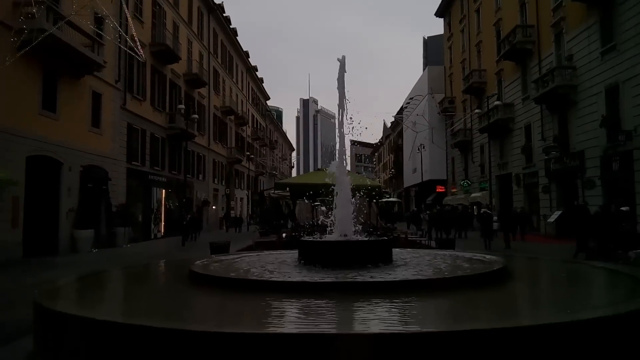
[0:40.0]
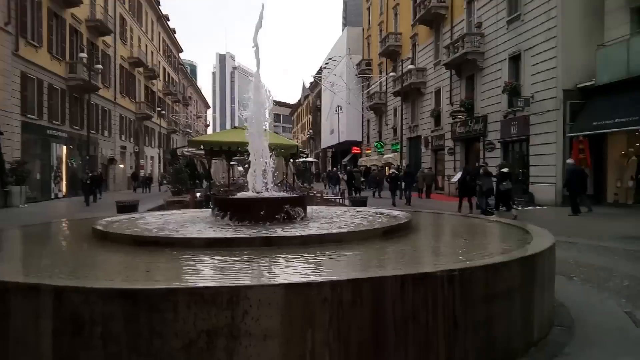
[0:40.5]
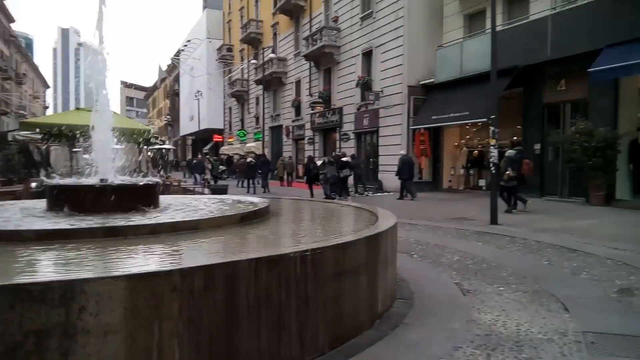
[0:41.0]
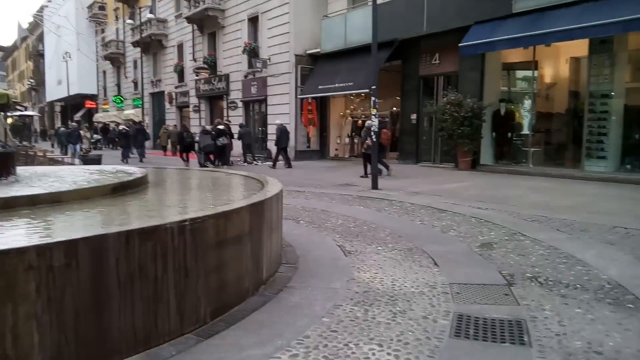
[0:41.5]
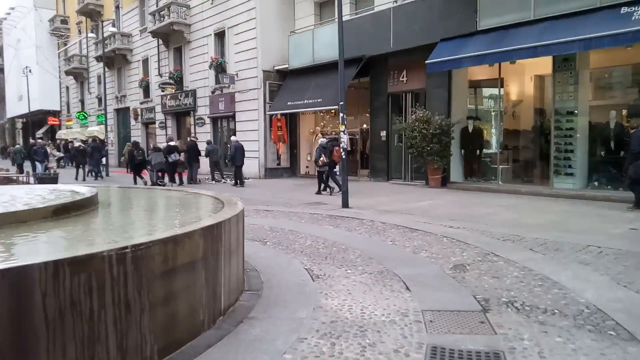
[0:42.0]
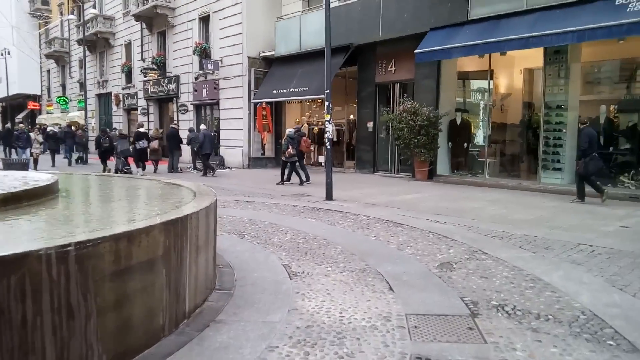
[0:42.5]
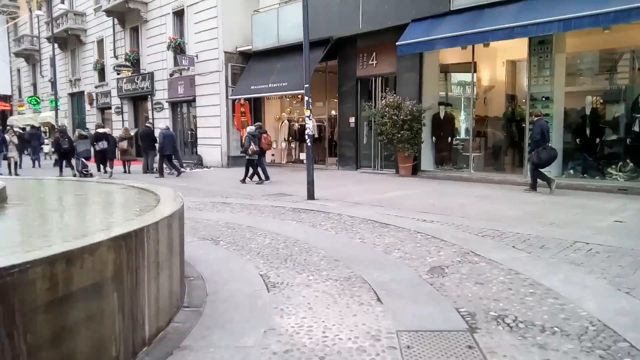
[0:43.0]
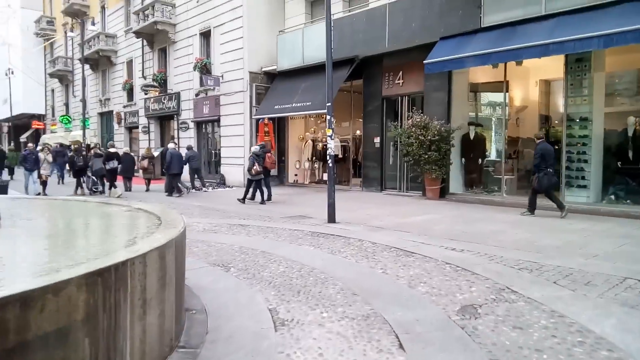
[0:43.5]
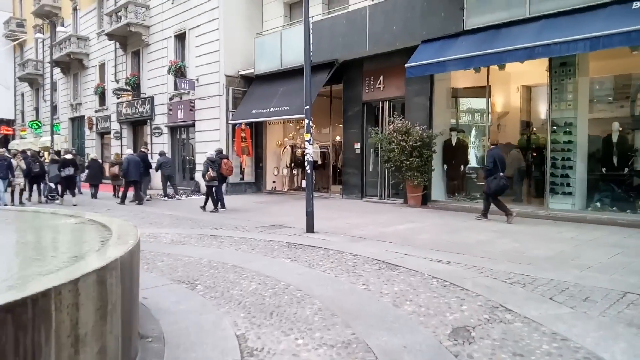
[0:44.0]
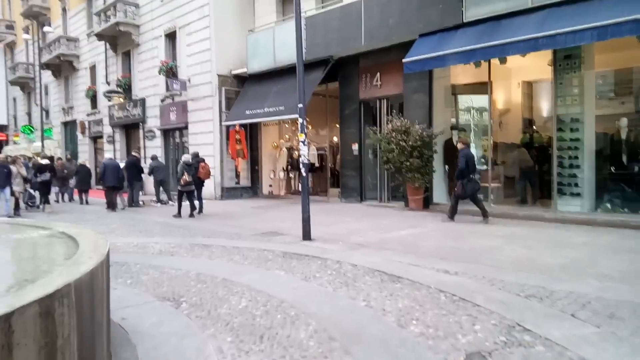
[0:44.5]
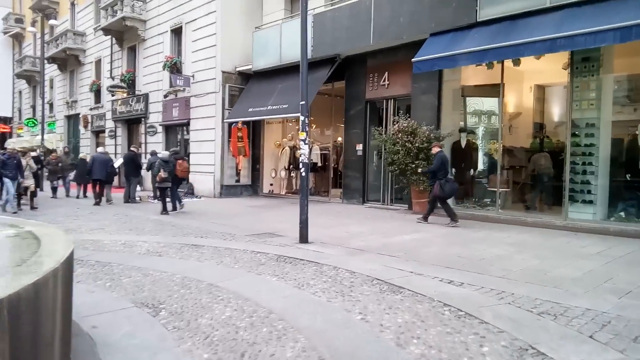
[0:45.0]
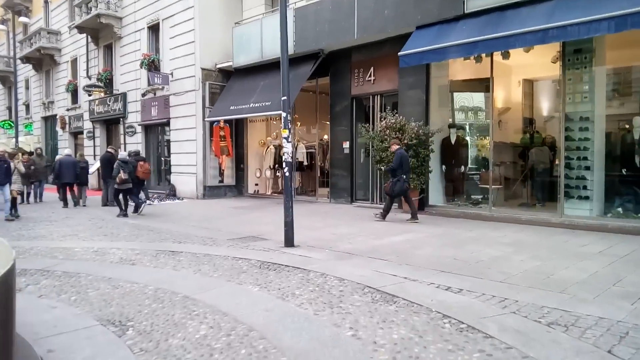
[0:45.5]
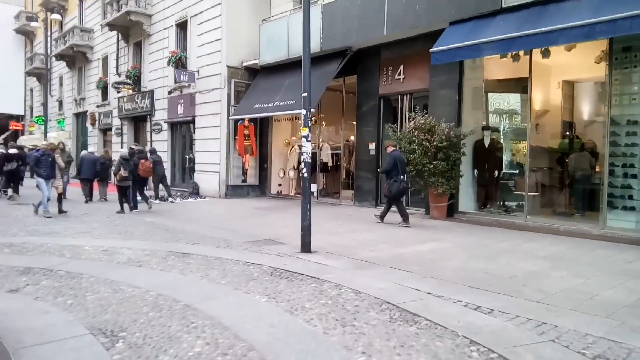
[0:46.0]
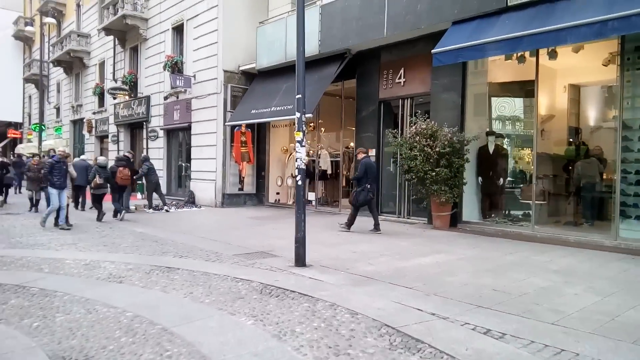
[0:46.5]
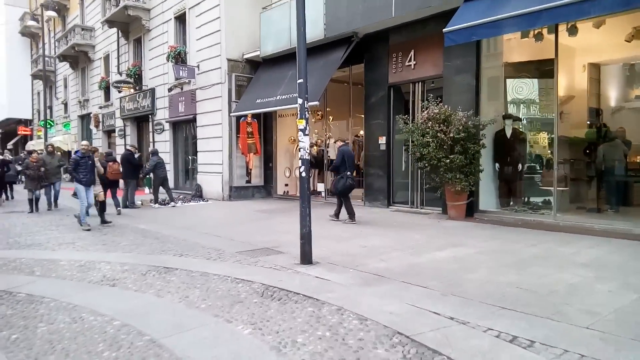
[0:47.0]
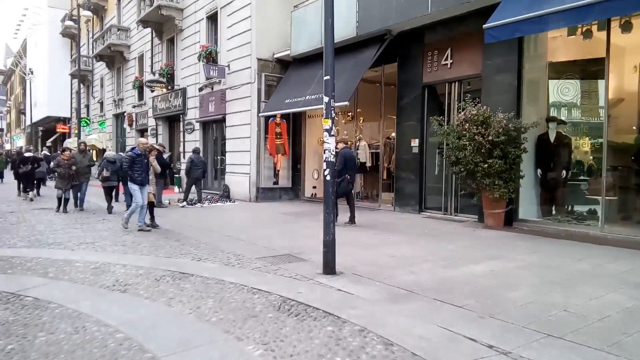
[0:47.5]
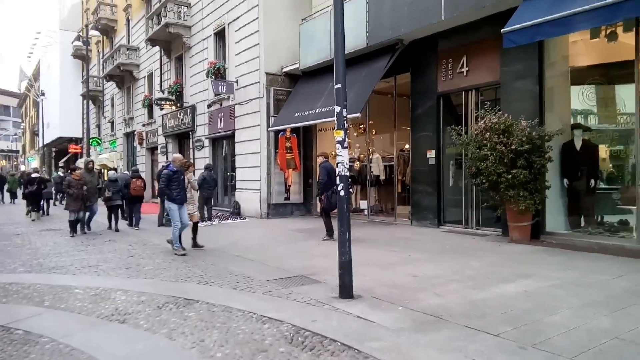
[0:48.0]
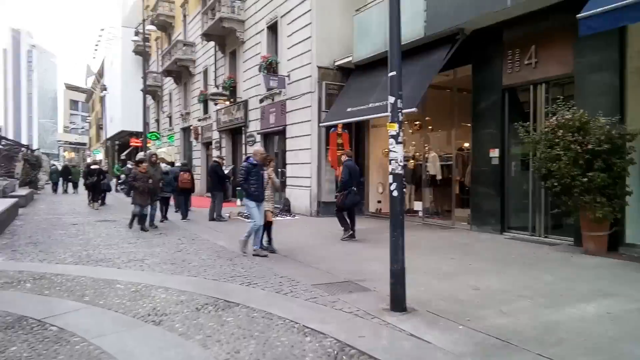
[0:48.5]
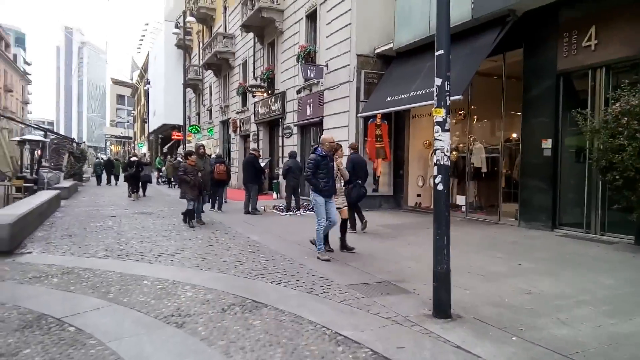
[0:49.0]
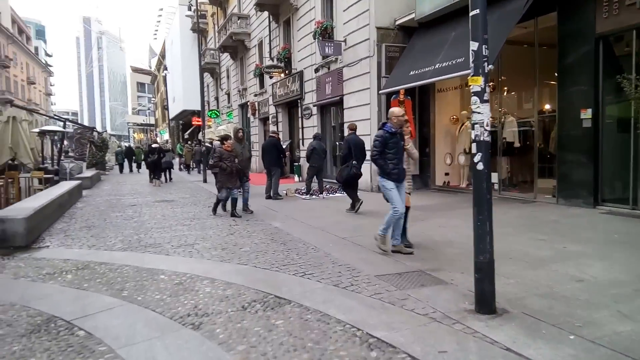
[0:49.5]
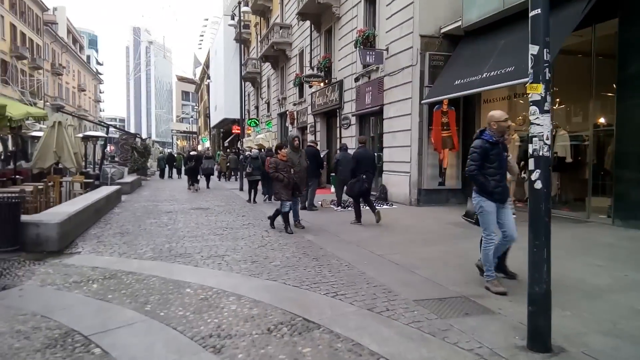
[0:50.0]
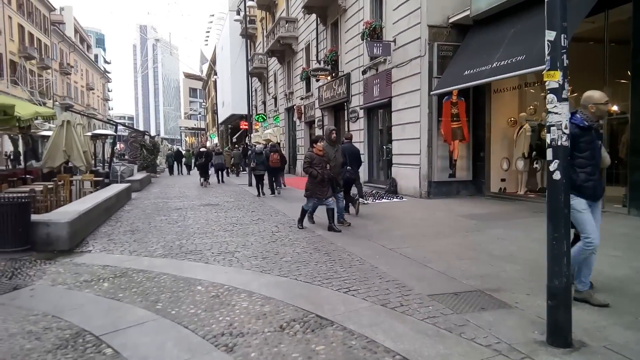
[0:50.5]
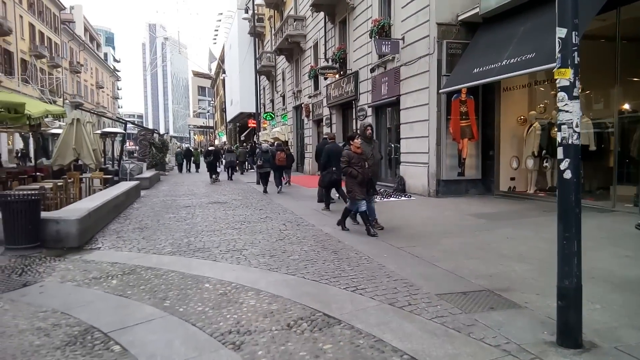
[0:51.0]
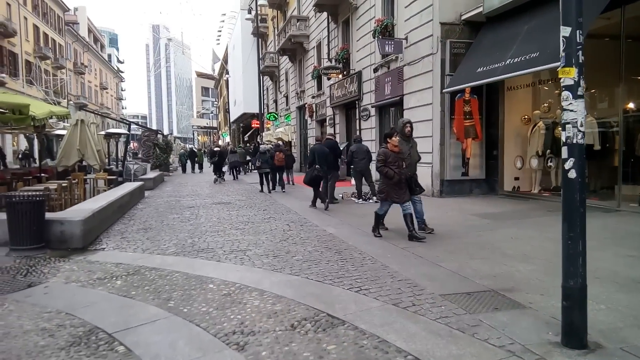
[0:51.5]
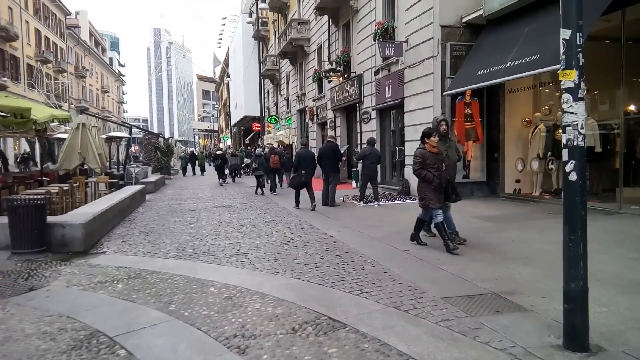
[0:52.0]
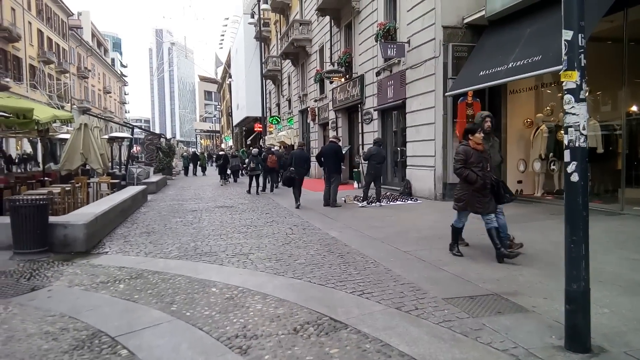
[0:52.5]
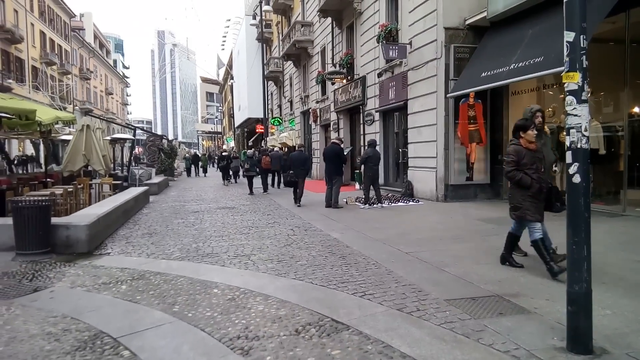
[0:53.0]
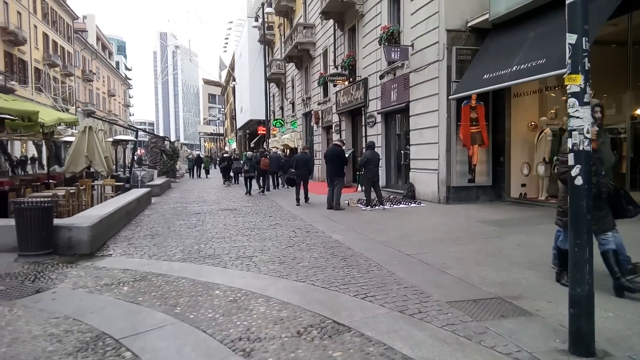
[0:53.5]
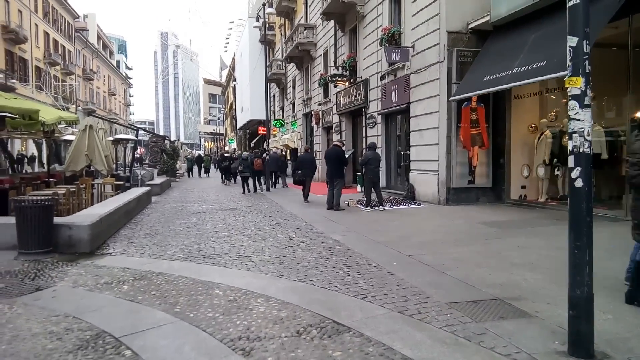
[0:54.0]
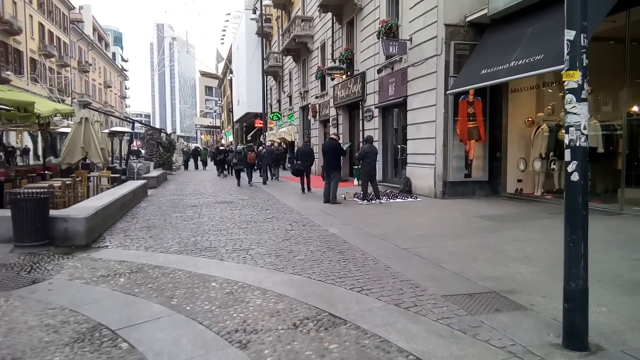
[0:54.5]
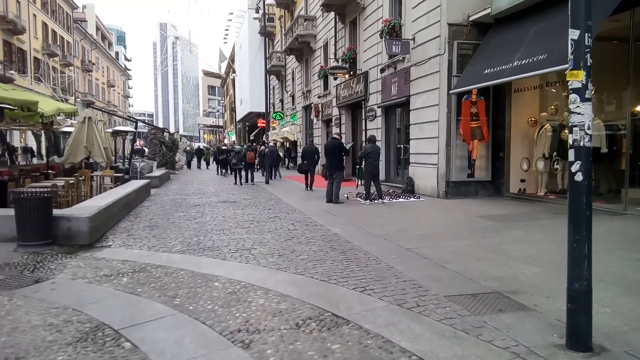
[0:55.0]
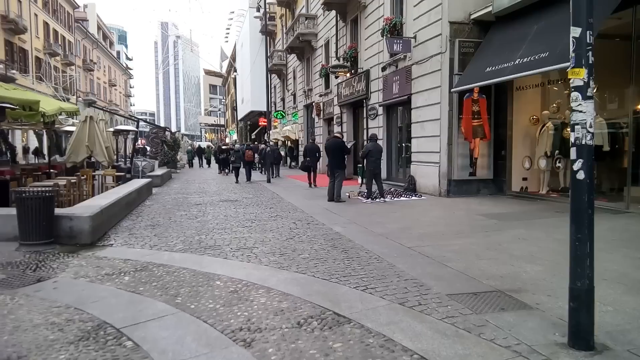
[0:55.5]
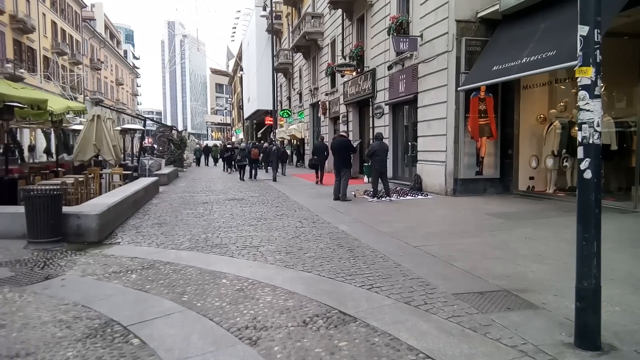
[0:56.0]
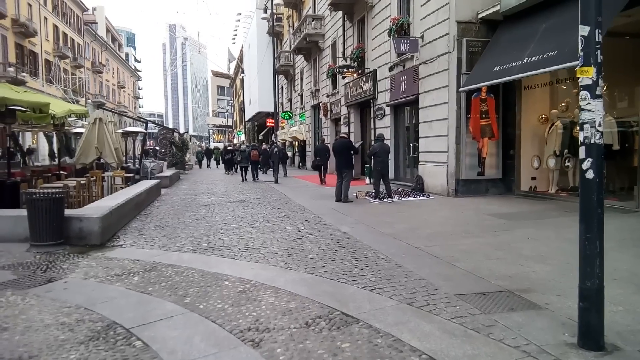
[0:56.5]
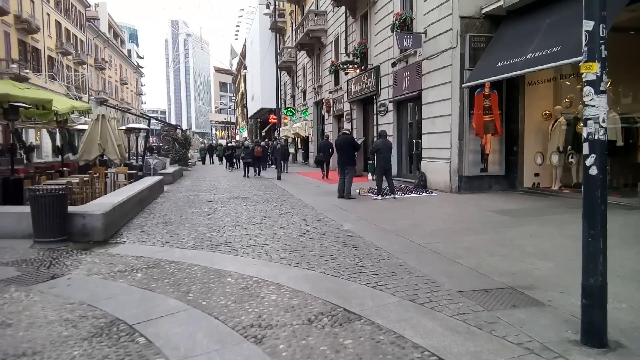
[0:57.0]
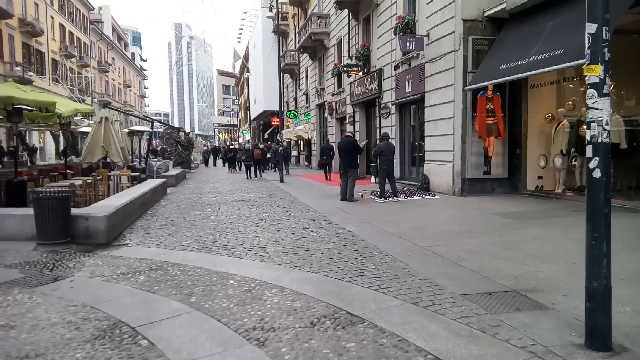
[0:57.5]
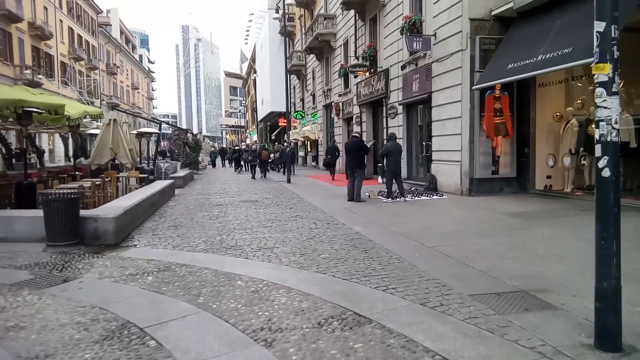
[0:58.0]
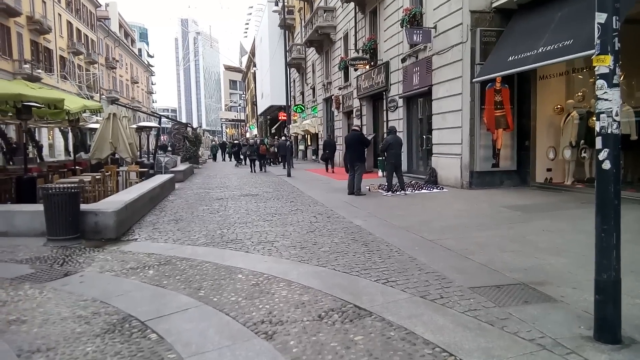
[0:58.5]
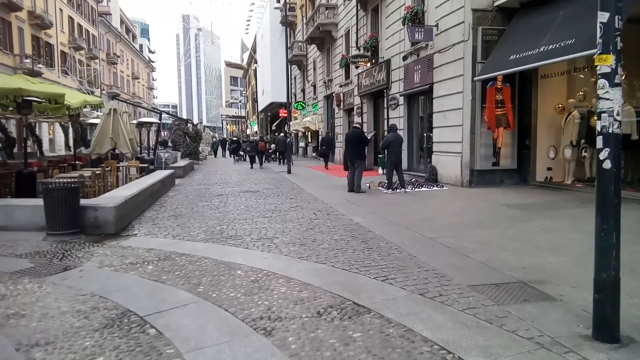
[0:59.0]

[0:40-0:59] The camera adjusts to the lighting as it darkens and then goes brighter again. It pans slightly to the right from the fountain as the person recording walks towards a tall, skinny black pole with many markings at eye level. Many people are walking around, many in couples and many wearing winter clothes, so it is probably winter time. Shops are still open, and it seems to be daytime. The person recording stops walking; shops such as clothing stores are around, and the pavement is grey brick. The building in front of her has balconies with flowers at the windows and an entrance with red flooring in front of it, almost giving a luxurious feeling. On the side of the building there is an ad showing a model on a catwalk.